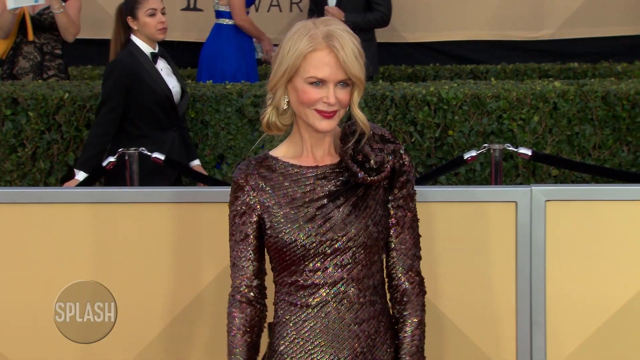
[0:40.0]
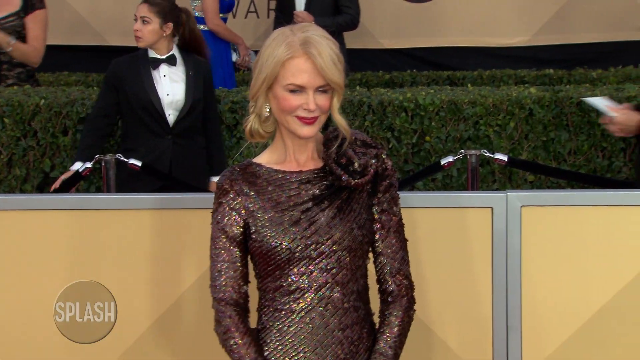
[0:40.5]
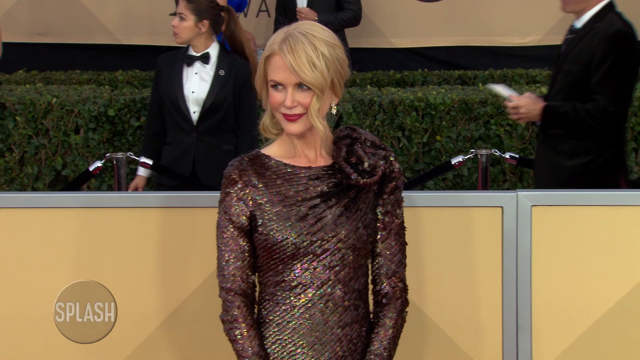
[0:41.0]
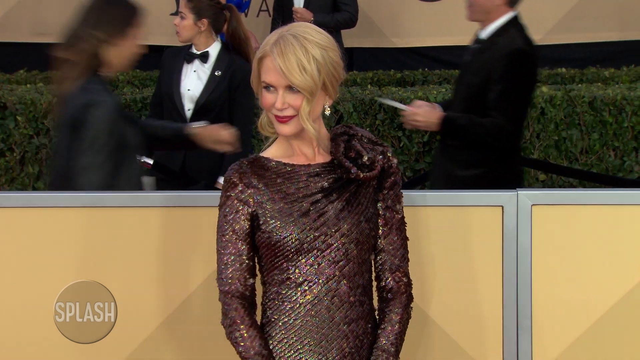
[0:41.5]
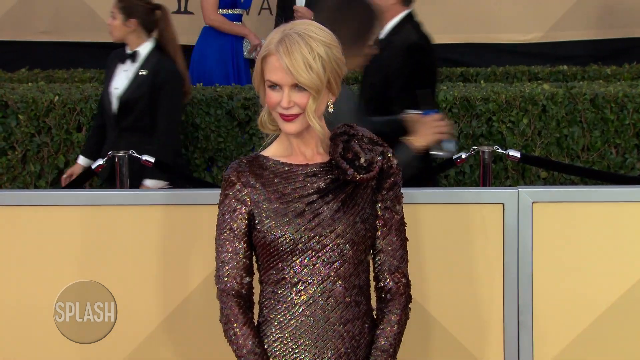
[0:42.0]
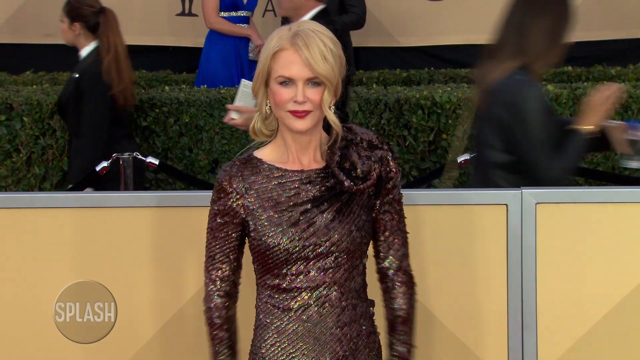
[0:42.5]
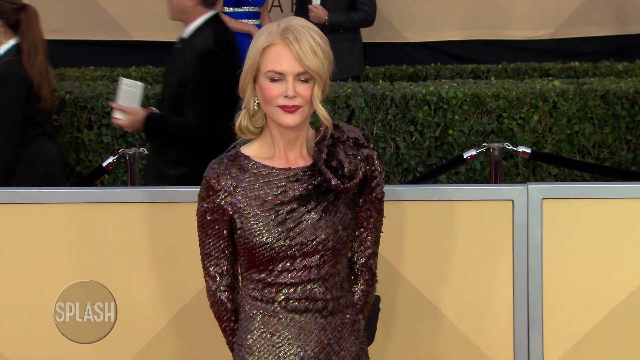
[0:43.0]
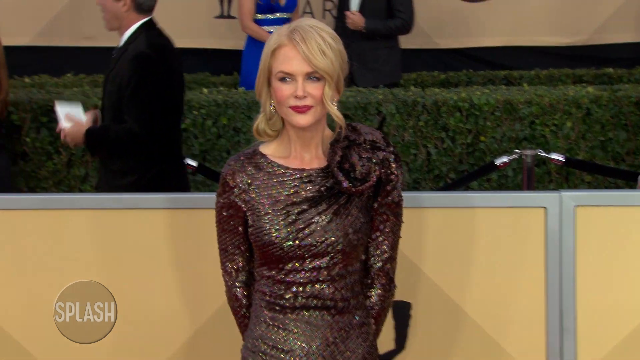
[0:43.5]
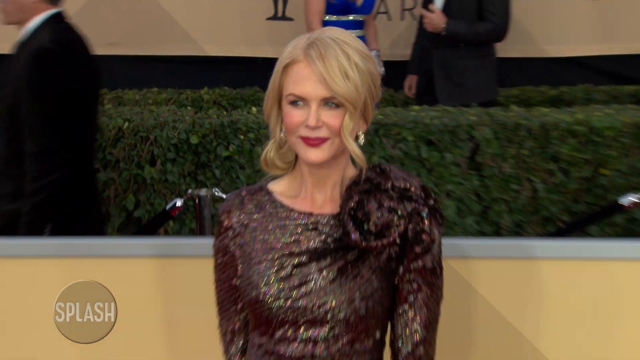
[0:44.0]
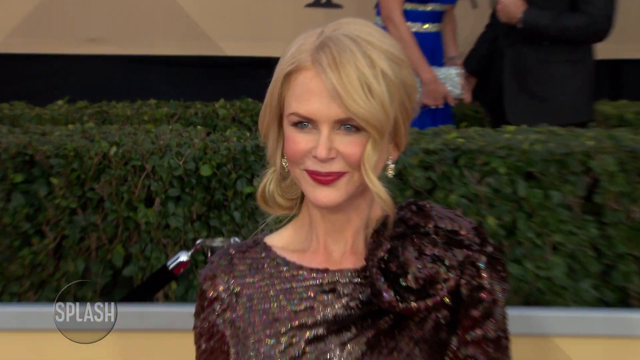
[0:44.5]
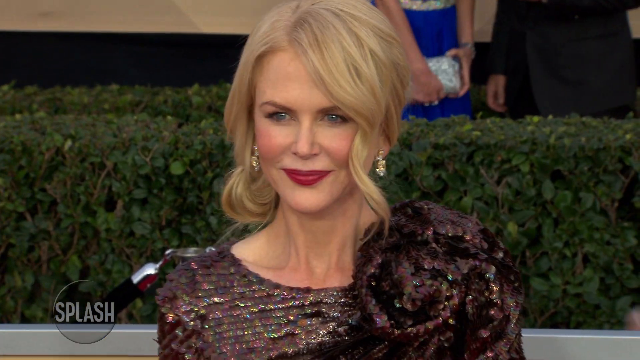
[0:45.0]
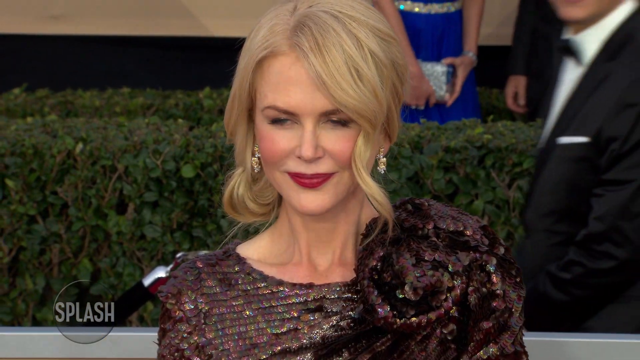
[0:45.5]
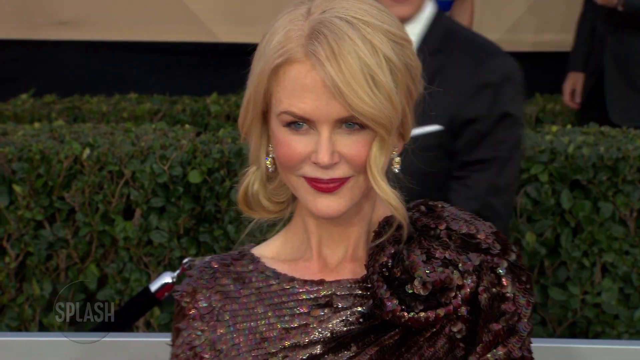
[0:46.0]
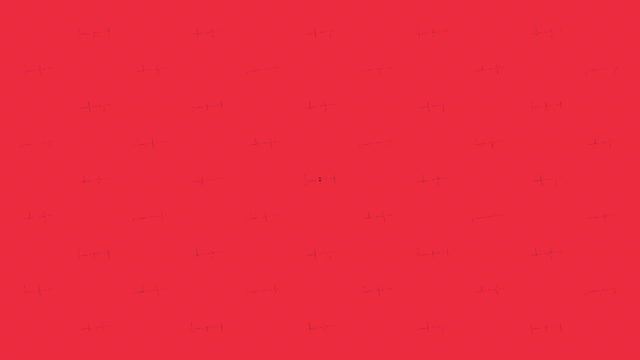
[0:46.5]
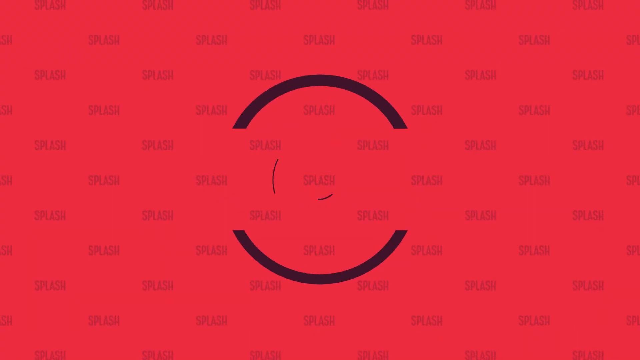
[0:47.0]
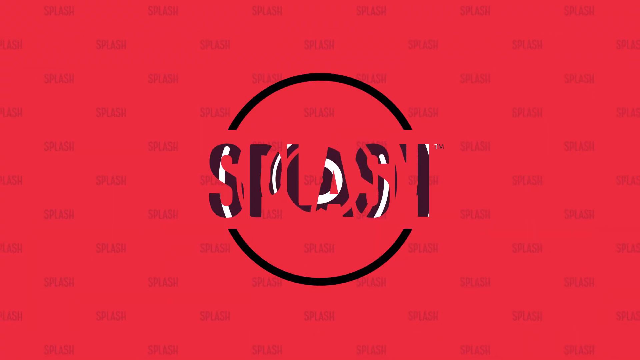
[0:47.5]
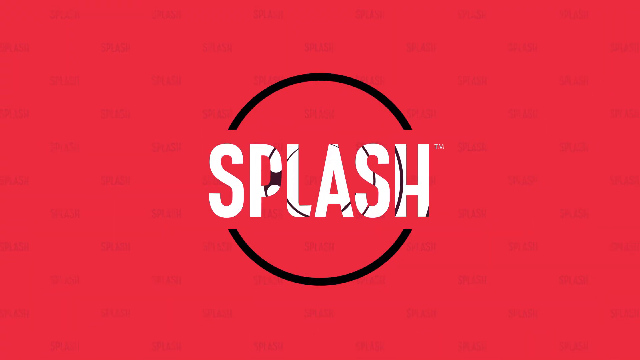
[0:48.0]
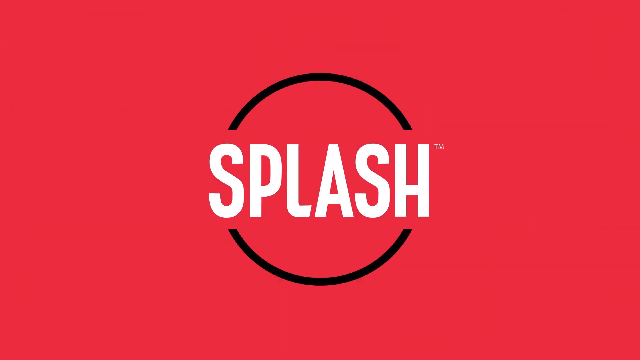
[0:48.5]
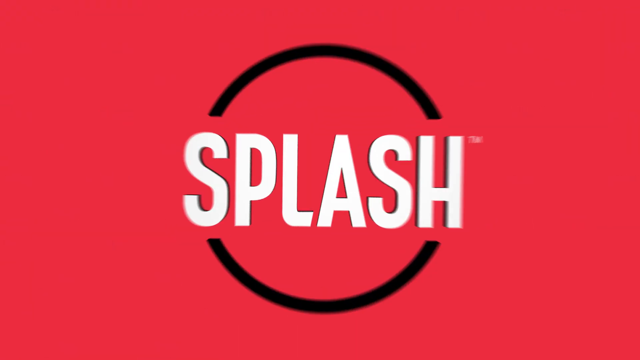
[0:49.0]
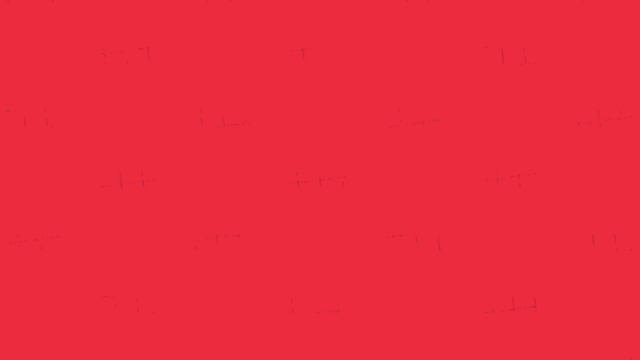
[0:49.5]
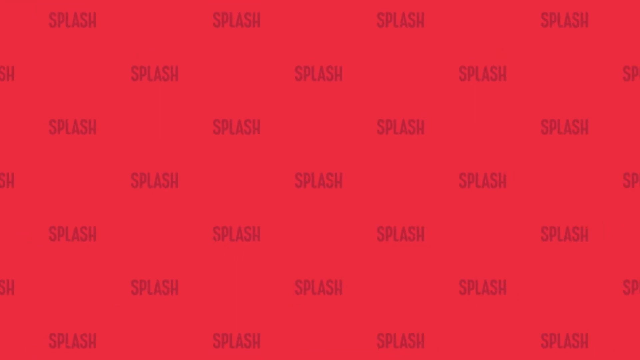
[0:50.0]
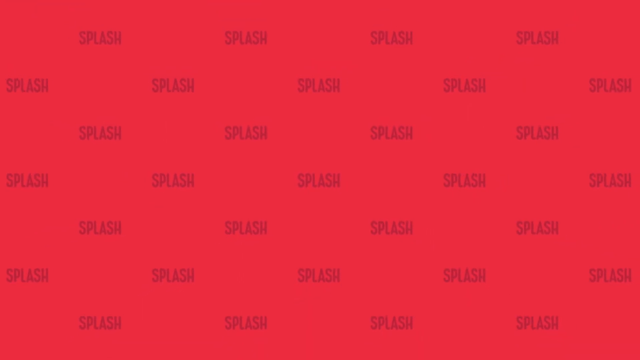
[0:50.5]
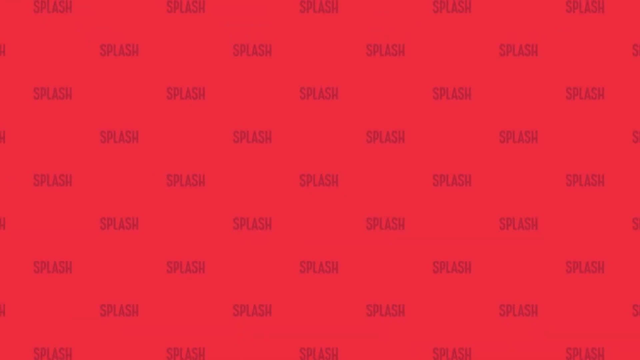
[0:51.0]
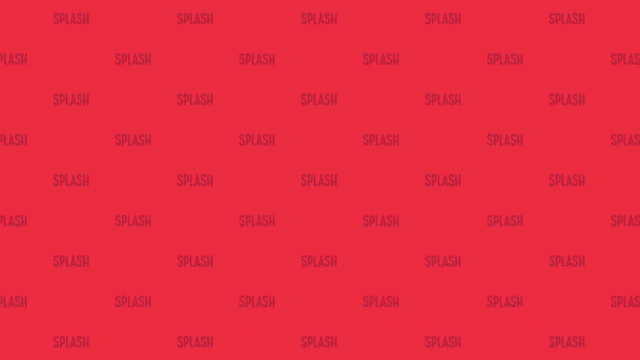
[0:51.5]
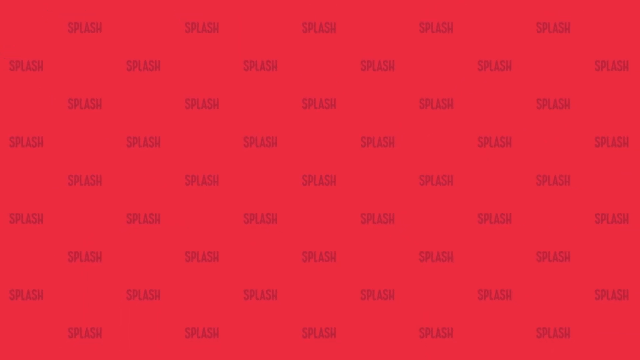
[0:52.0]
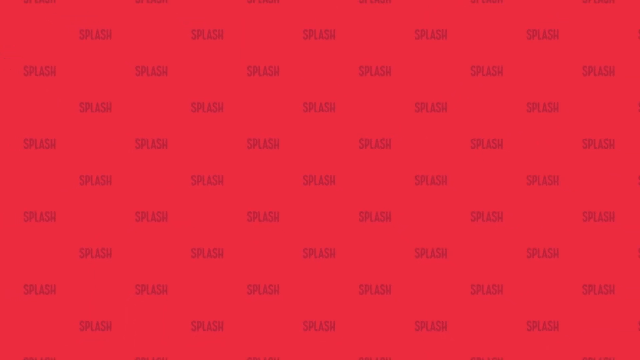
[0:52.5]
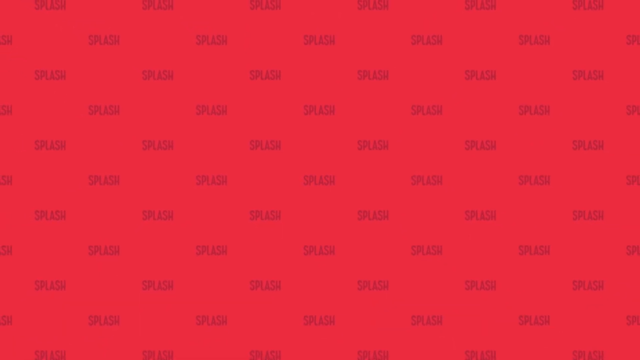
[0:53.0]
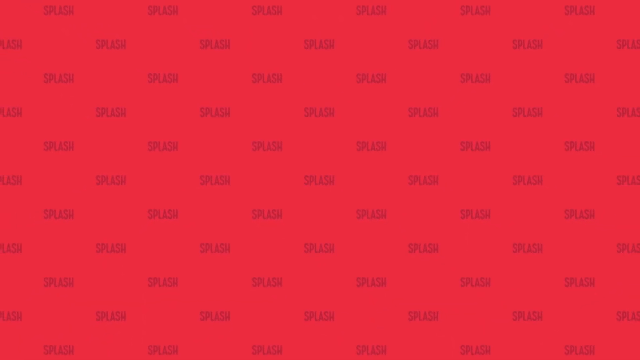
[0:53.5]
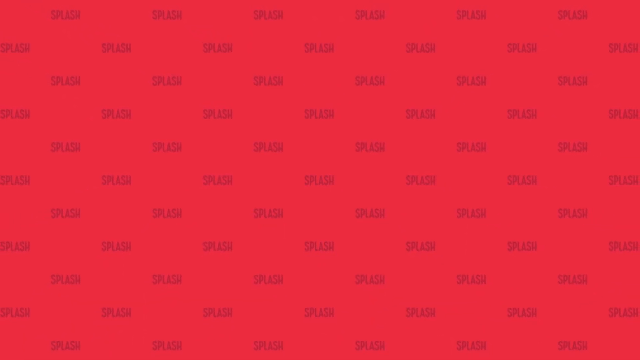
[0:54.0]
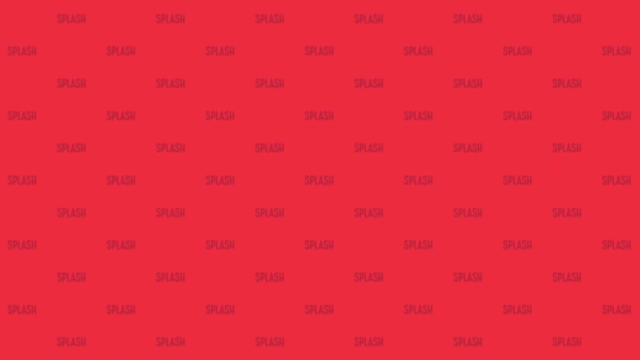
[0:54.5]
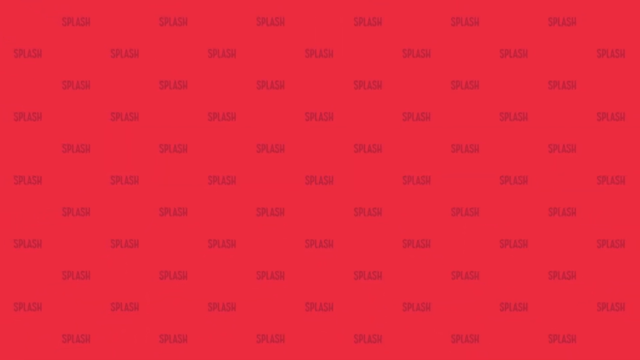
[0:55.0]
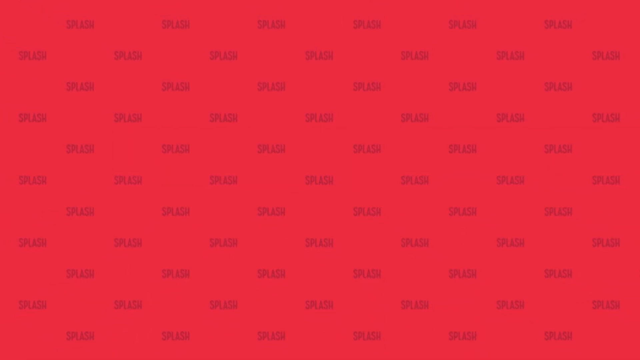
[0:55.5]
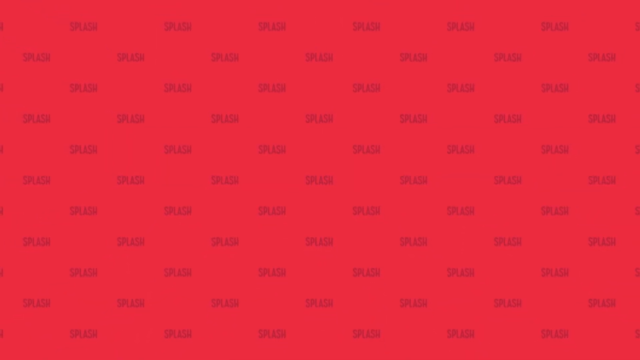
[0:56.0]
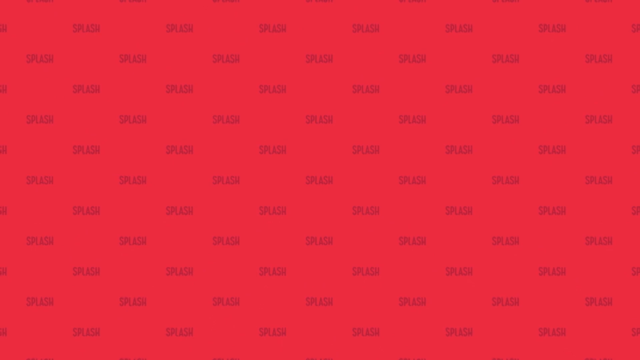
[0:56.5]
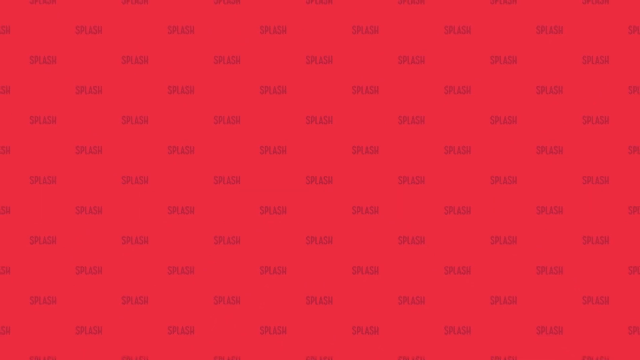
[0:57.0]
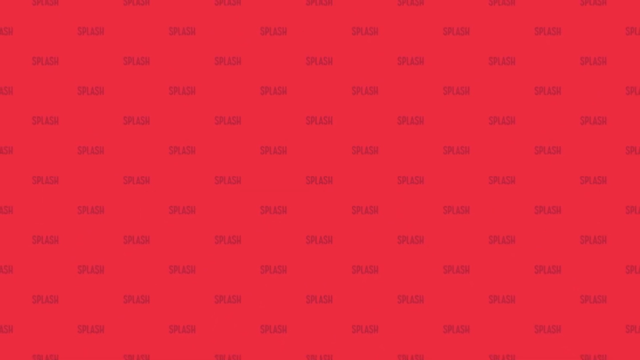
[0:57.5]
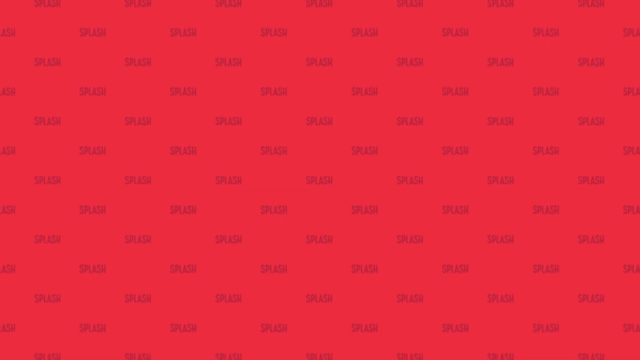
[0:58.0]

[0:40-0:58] A young woman with long white hair wears a black, silvery shiny dress with a flowery decoration on the left shoulder. Behind her, men in suits with black collars move by, and some stand behind looking at her. There are two lines of well-trimmed fences made of plants. Behind her are also a man and a woman; the man holds something, and the woman, in a blue dress, holds a white purse. The video focuses on the young woman as she poses and smiles. It ends with an advertisement that says "splash" on a red background, with the word "splash" repeated many times on the screen as the video zooms out. The video is about this celebrity, who is a singer.